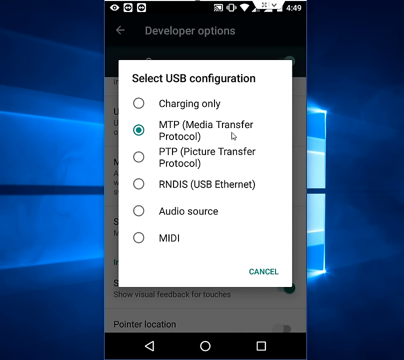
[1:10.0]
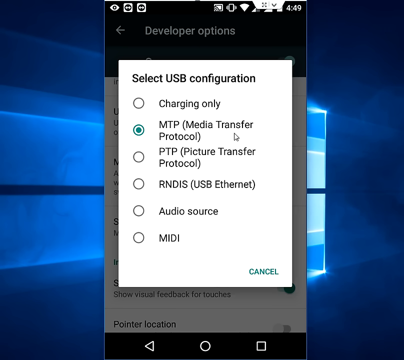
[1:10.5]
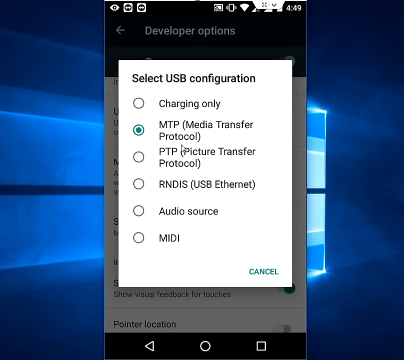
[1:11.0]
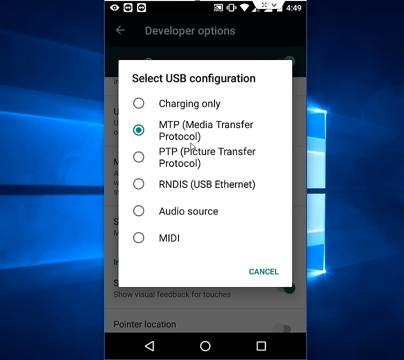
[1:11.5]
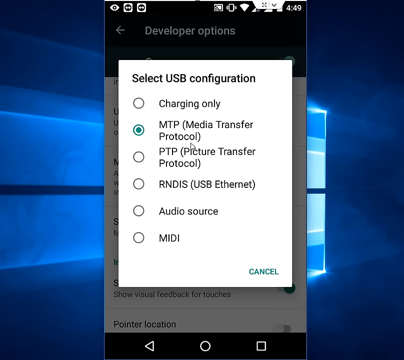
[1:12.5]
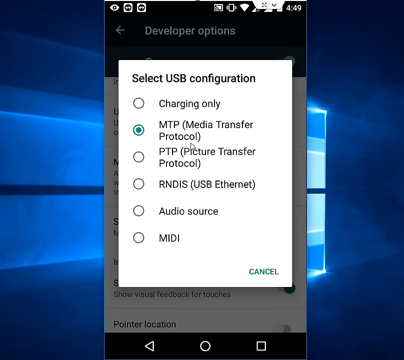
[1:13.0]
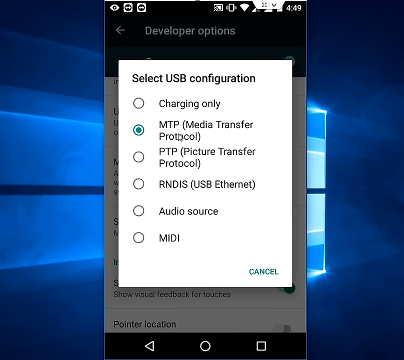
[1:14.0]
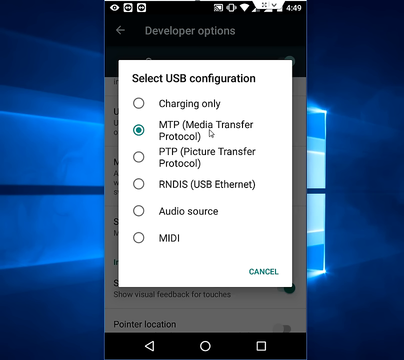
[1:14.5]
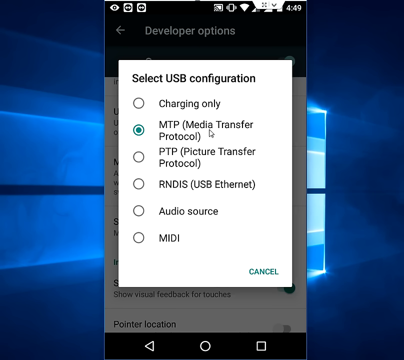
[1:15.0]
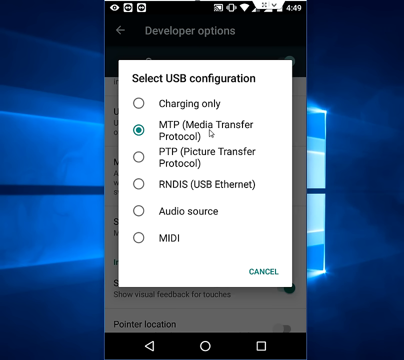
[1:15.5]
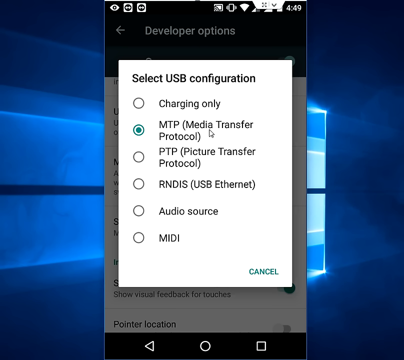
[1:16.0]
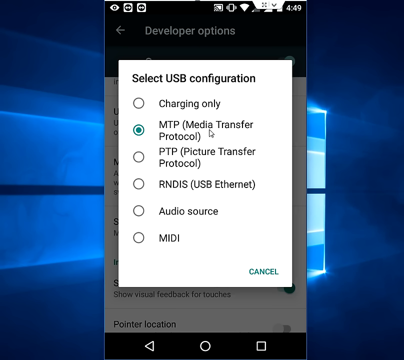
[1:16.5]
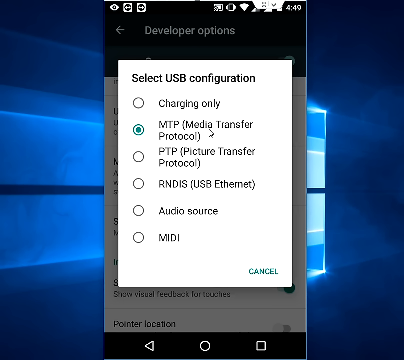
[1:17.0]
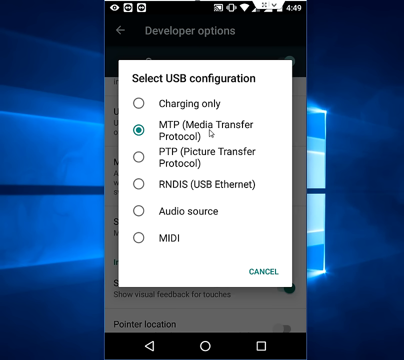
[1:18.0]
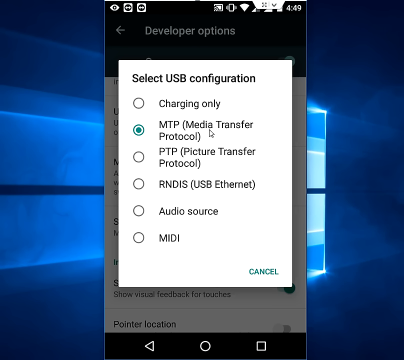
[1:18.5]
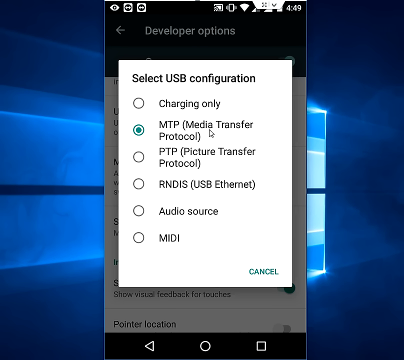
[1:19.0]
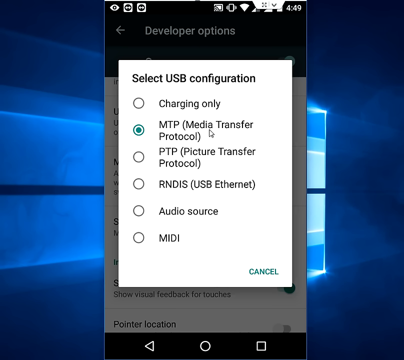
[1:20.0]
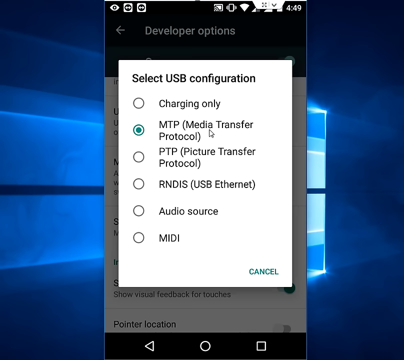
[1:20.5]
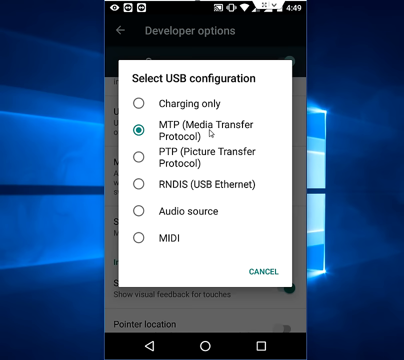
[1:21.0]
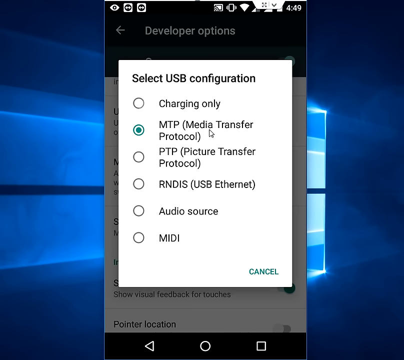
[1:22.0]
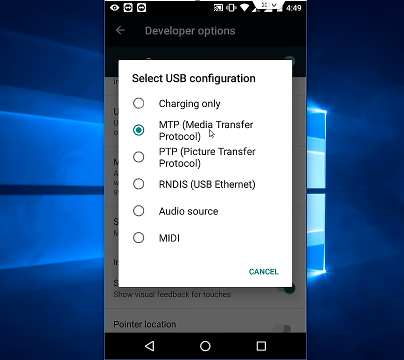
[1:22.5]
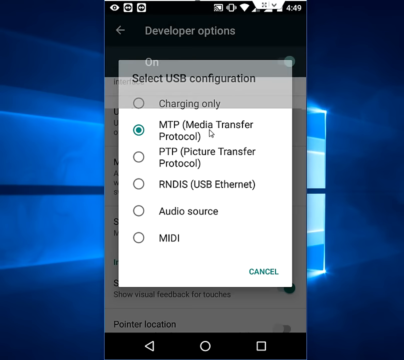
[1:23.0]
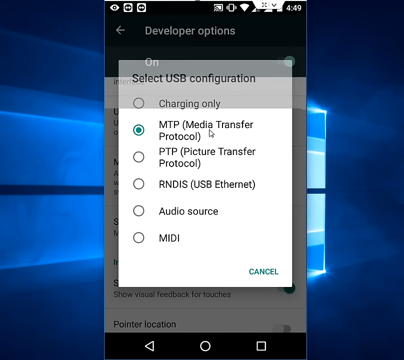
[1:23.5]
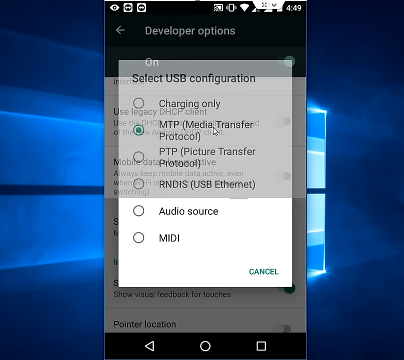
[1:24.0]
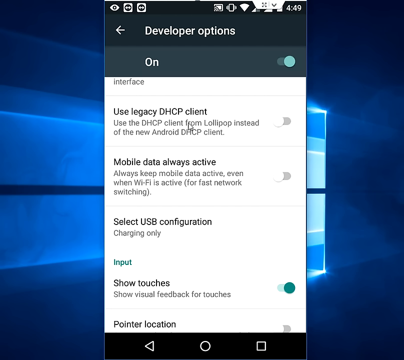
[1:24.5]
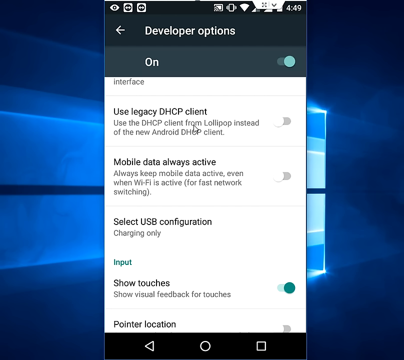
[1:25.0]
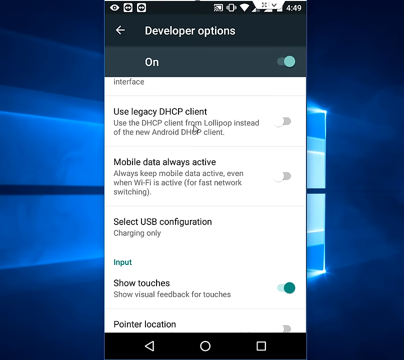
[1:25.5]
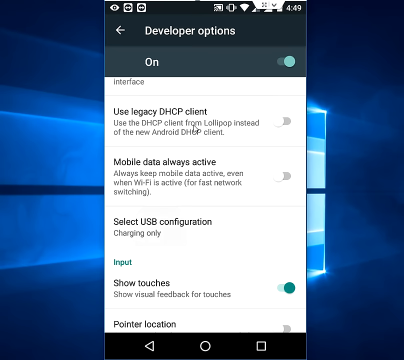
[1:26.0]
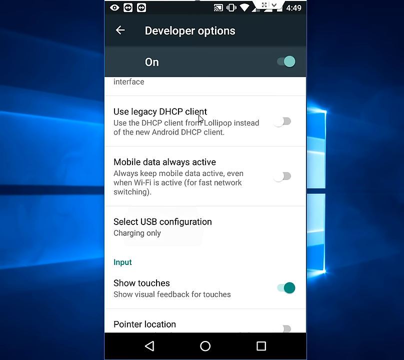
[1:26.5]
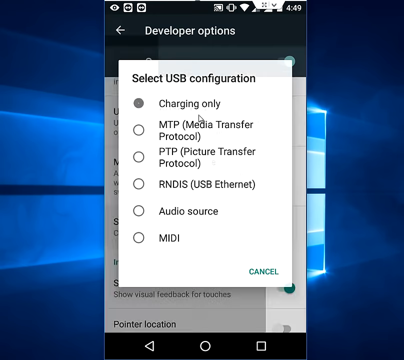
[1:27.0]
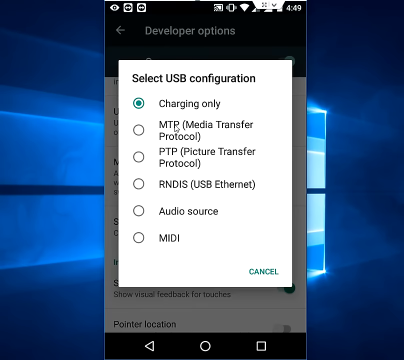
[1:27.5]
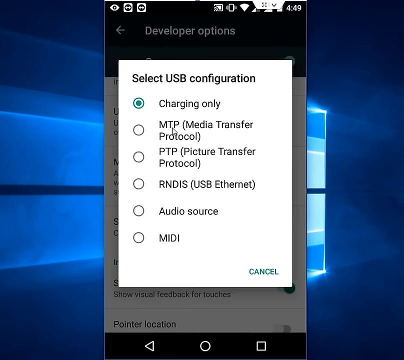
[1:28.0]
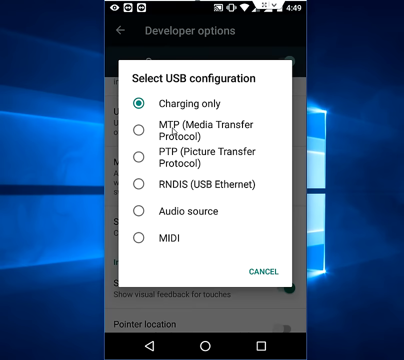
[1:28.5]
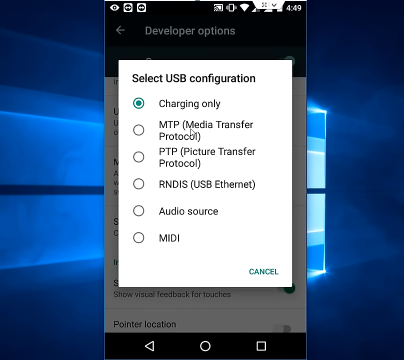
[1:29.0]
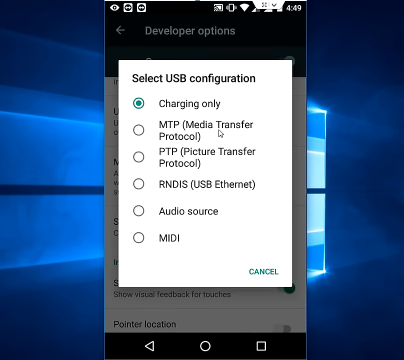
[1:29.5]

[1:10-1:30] The select USB configuration screen is selected and enlarged, listing the options charging only, MTP media transfer protocol, PTP picture transfer protocol, RNDIS USB Ethernet, audio source, and MIDI. The user's cursor goes over each option and remains on the media transfer protocol option. The screen then moves back to the interface showing "Use Legacy DHCP Client" and "Mobile Data Always Active", both grayed out and not selected, and then to show touches, which is selected and switched on. All the images are displayed in the portrait mode of a cell phone, and the phone interface appears to be displayed on a computer screen, with what appears to be a Windows screen as the background behind the phone.